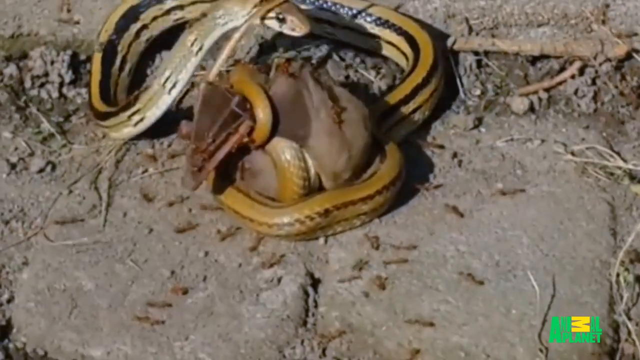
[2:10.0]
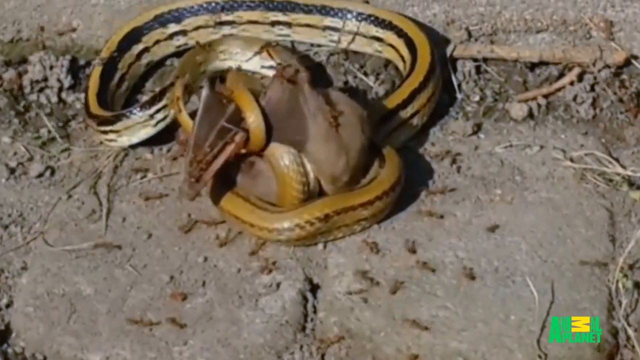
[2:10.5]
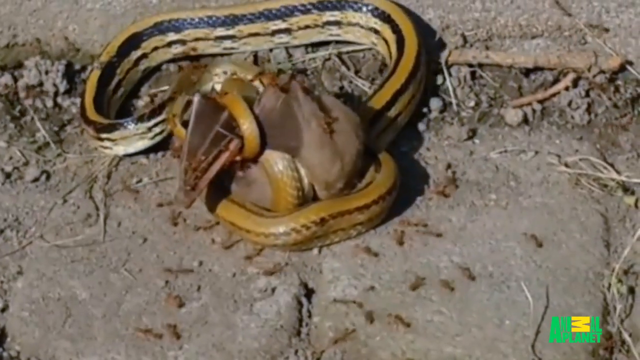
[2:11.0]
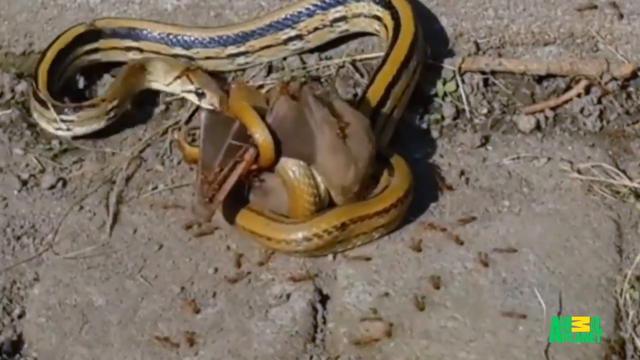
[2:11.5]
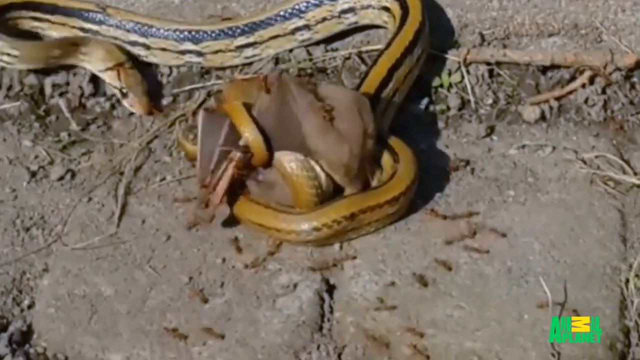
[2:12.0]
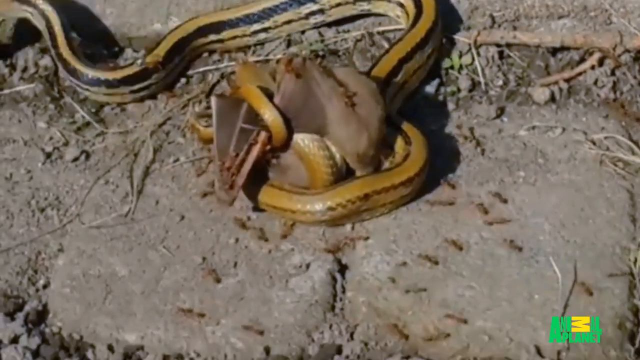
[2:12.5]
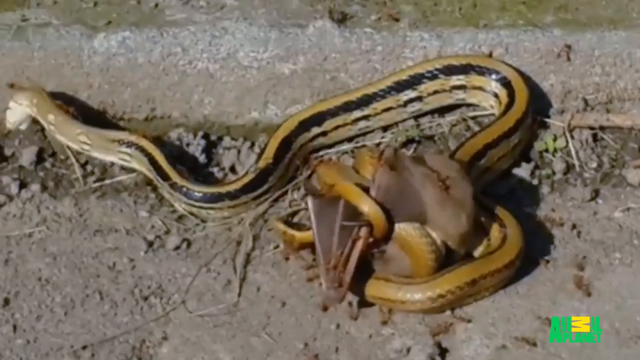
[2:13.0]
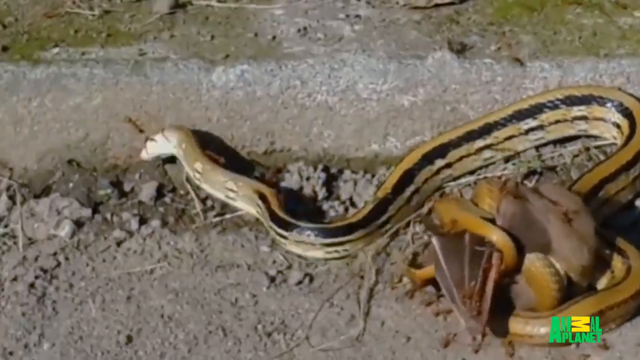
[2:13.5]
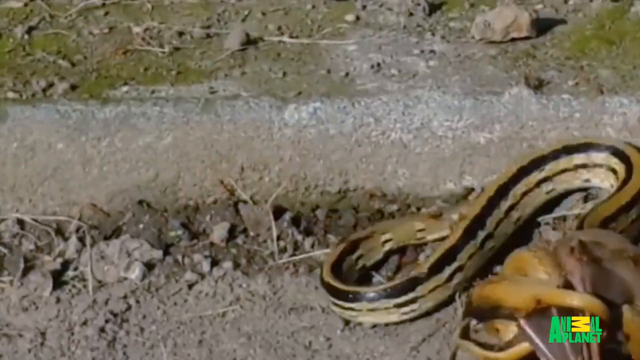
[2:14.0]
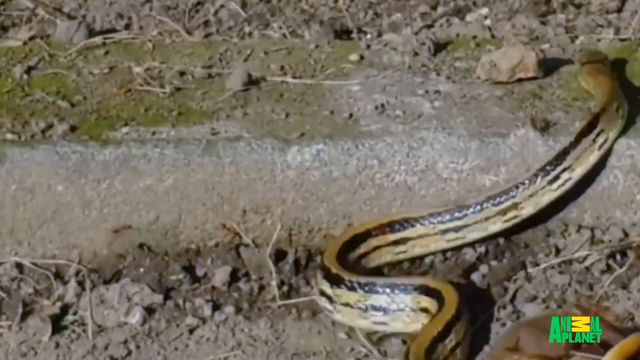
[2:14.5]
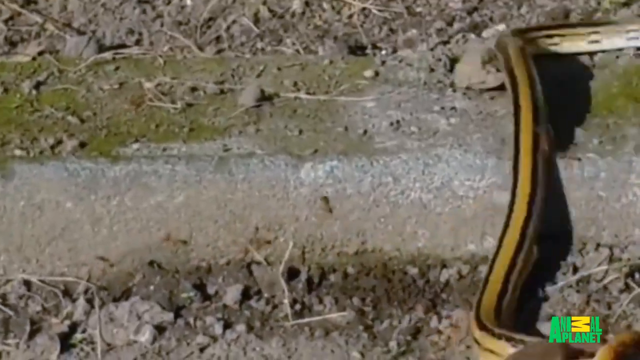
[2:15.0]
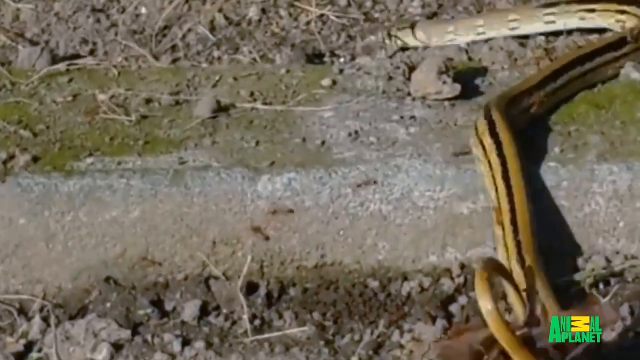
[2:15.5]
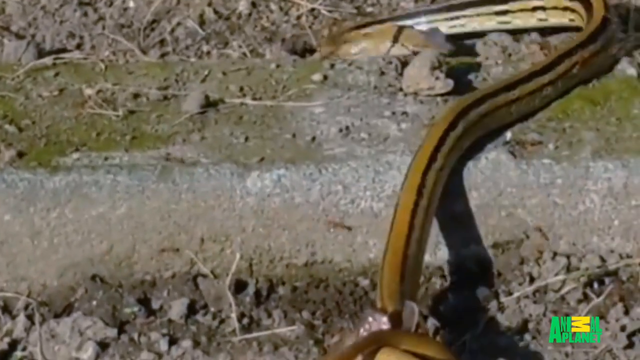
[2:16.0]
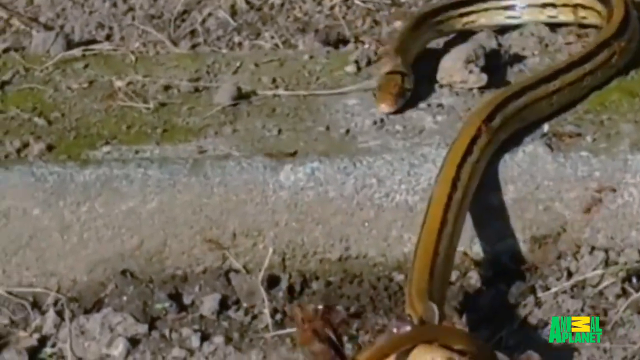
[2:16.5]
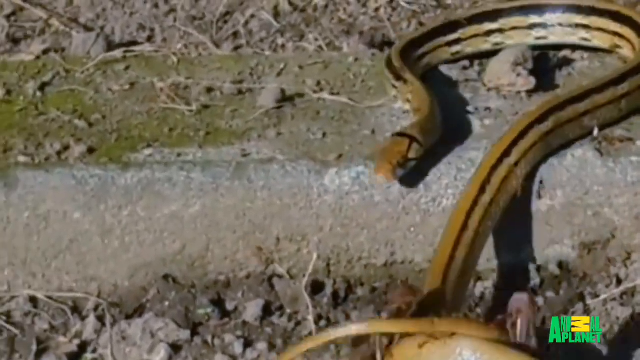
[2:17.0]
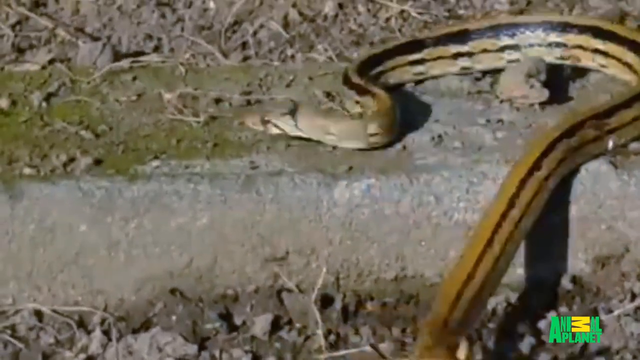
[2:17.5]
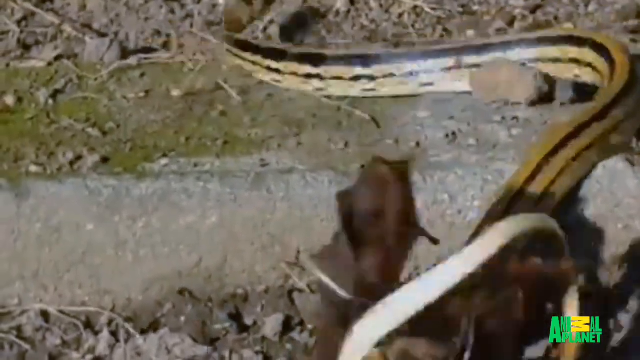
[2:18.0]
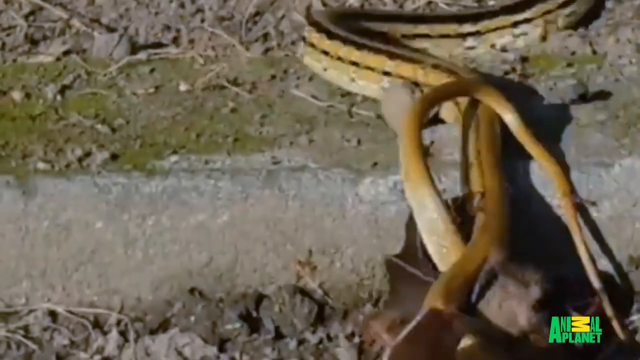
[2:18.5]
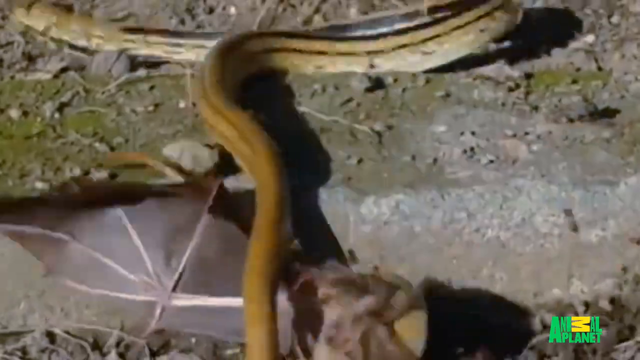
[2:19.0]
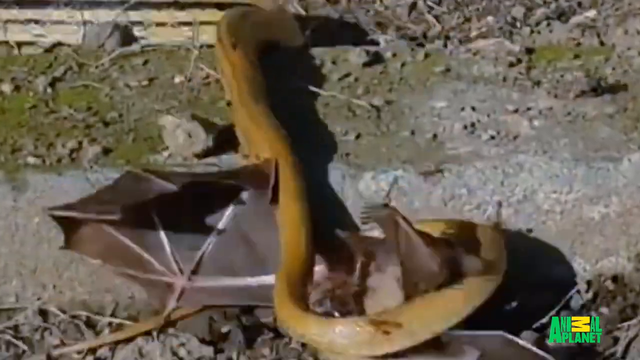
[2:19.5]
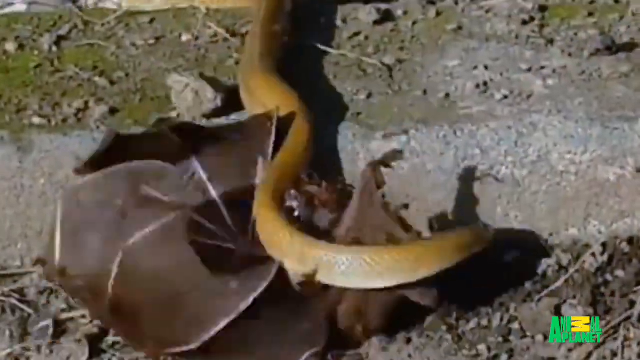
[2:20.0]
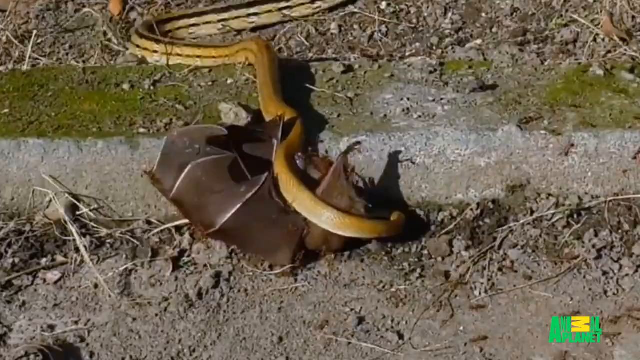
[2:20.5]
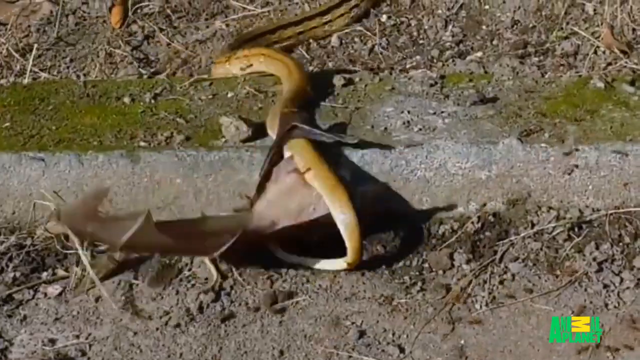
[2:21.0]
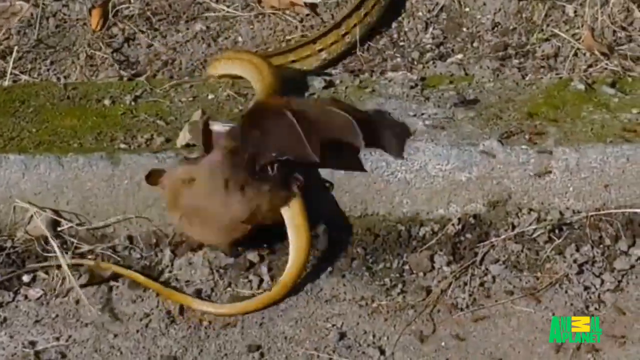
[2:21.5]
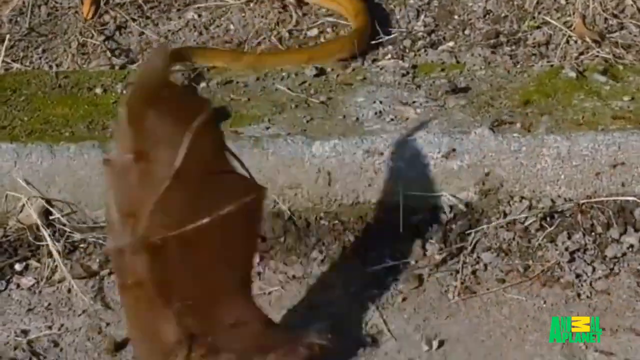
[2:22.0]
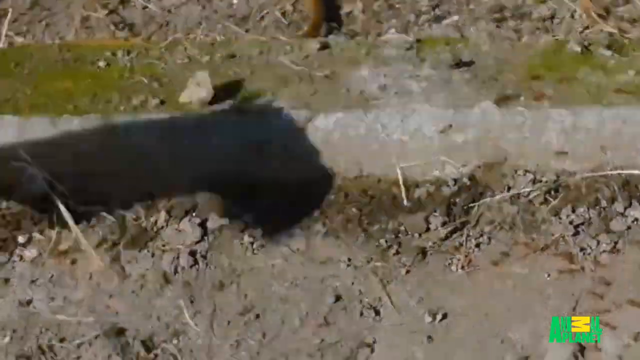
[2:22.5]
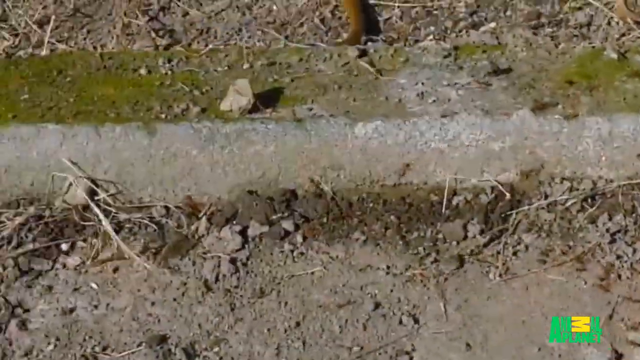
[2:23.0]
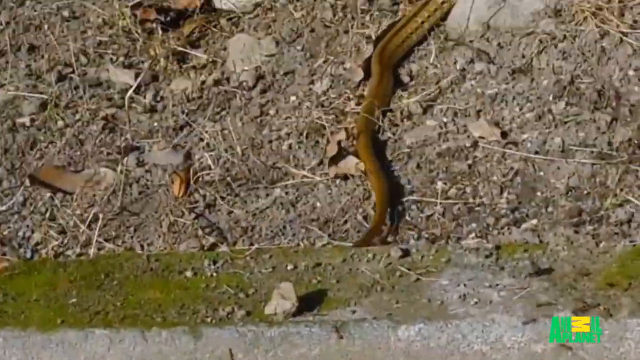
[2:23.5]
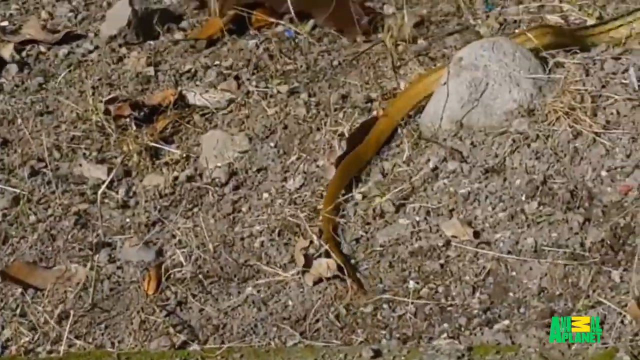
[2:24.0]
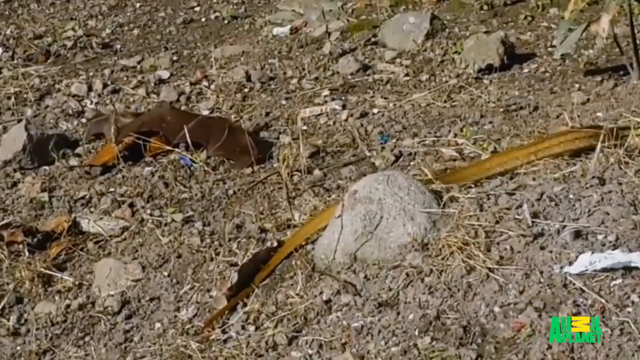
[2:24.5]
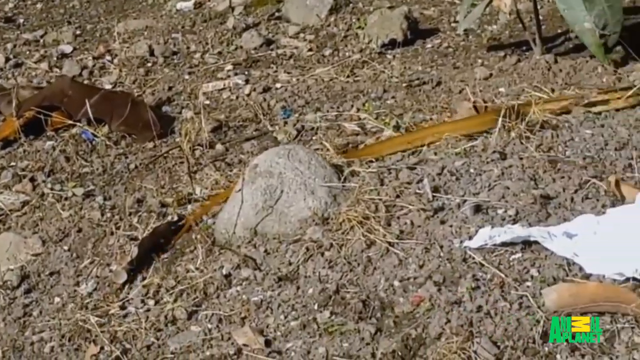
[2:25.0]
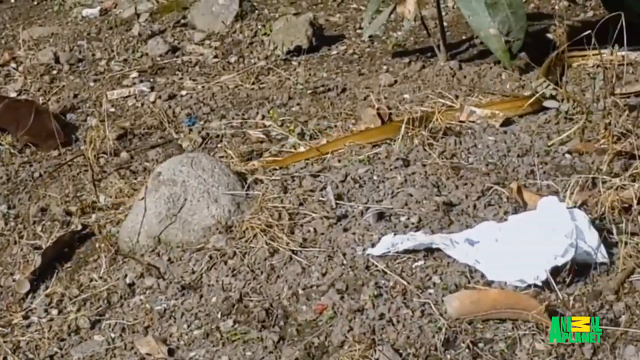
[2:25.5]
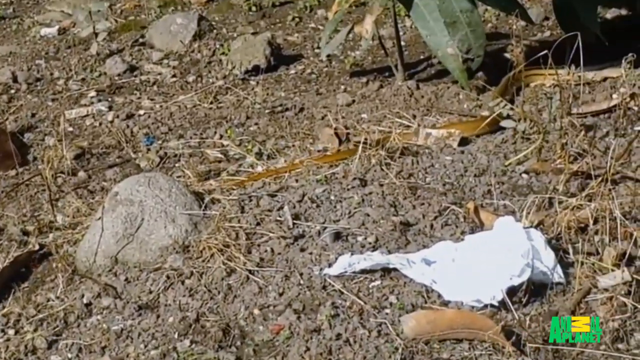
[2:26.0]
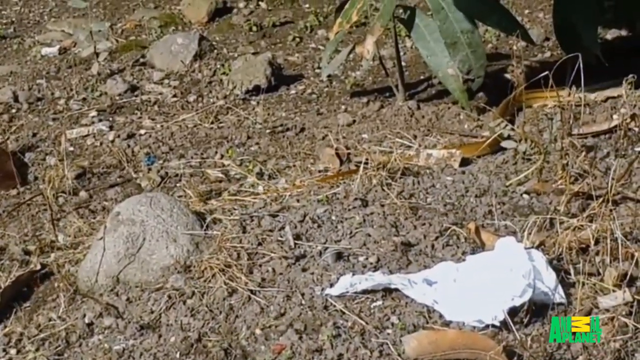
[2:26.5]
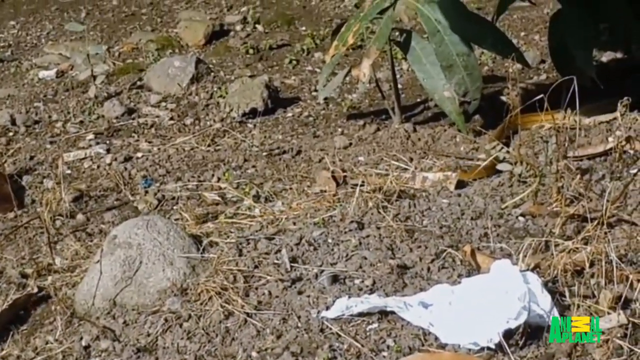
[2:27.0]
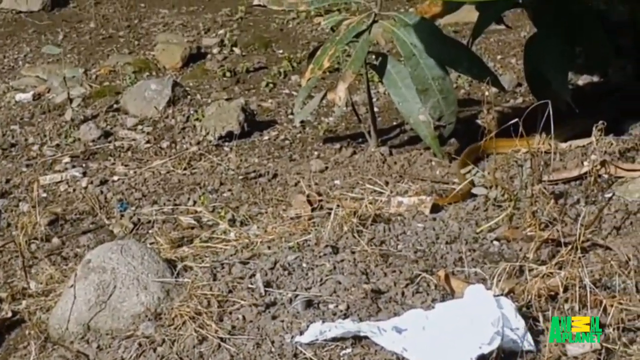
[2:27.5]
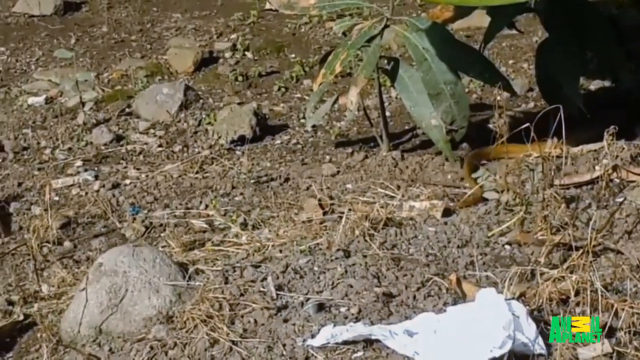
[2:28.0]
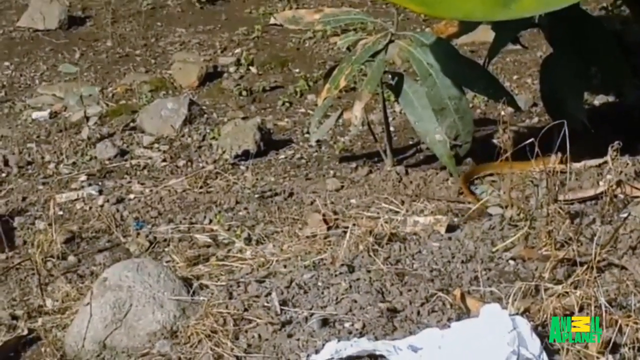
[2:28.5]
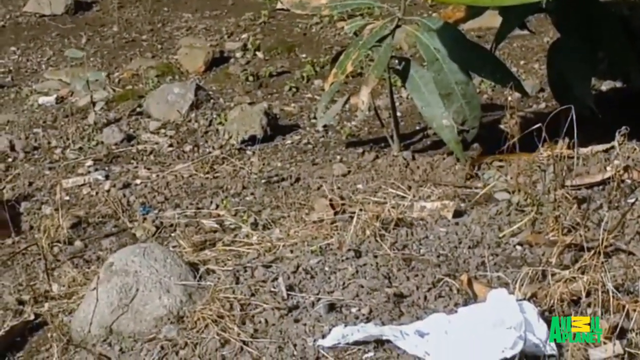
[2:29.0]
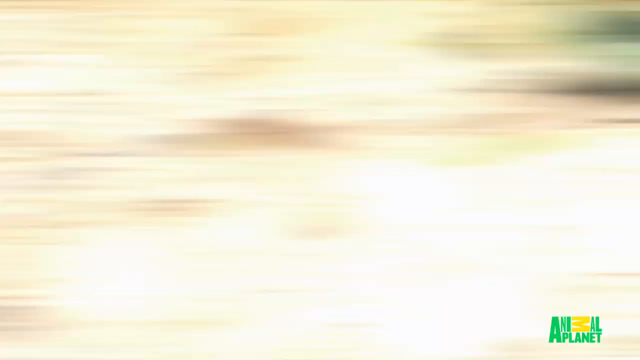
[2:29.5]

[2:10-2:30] A constrictor-type snake ambushing a brown bat is wrapped up around it. The bat flops all around, and it appears to get loose from the snake's grasp; having apparently gotten free, it attempts to fly away. At the end, the snake crawls off into the bushes. This is on the Animal Planet Network, with a green and yellow Animal Planet logo in the bottom right hand corner.